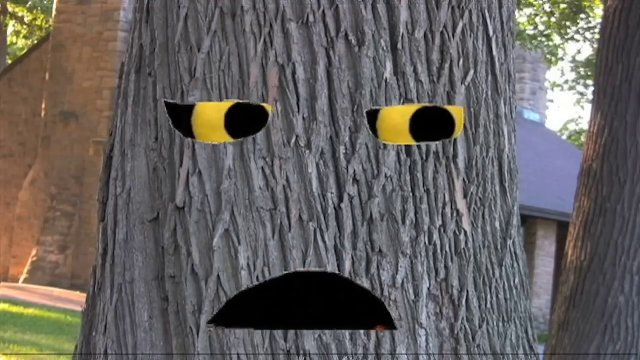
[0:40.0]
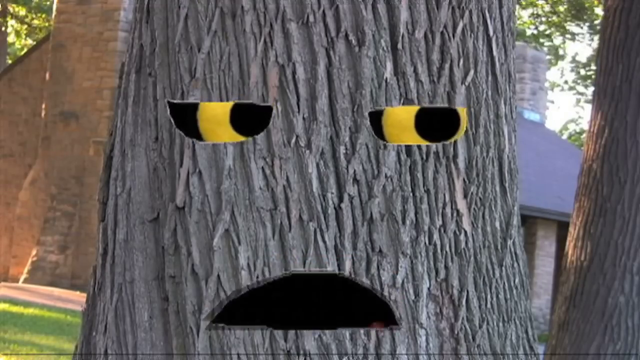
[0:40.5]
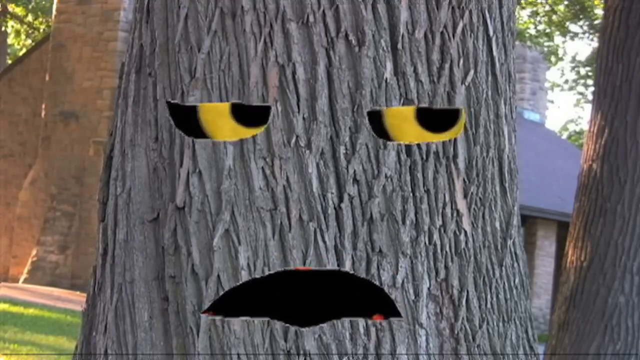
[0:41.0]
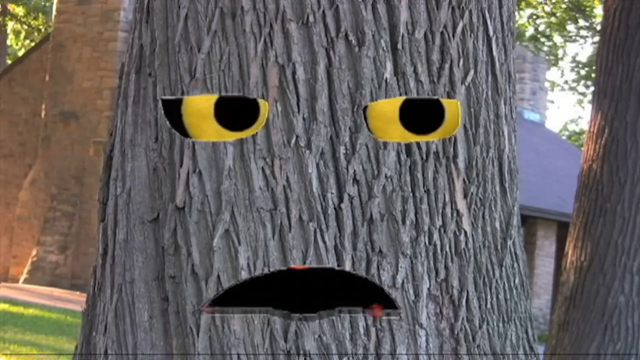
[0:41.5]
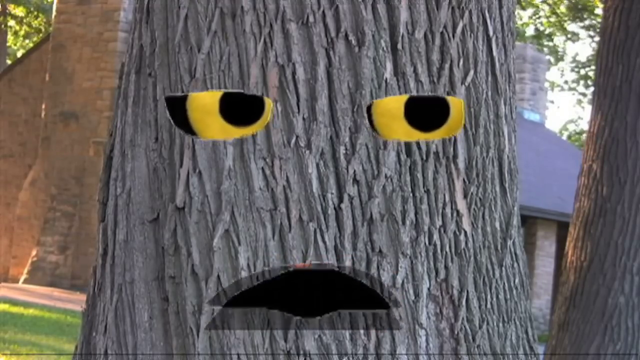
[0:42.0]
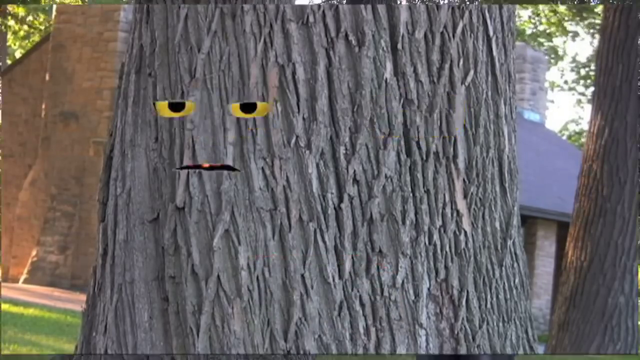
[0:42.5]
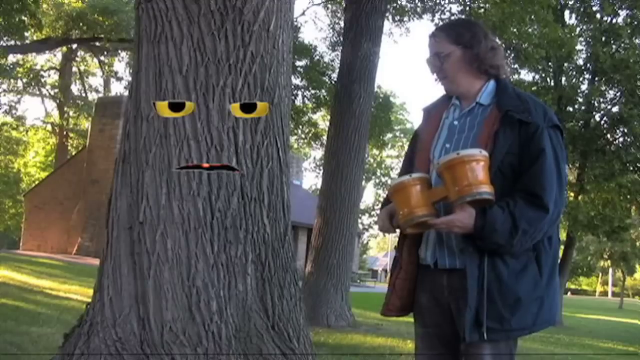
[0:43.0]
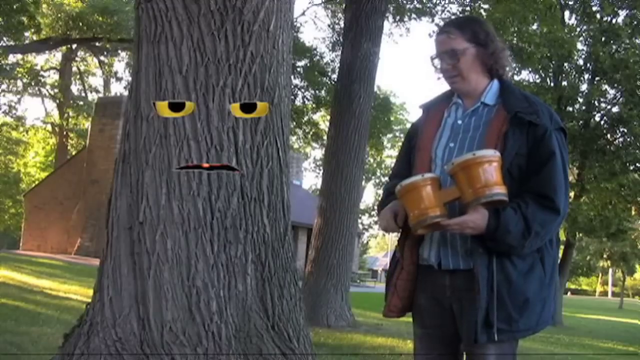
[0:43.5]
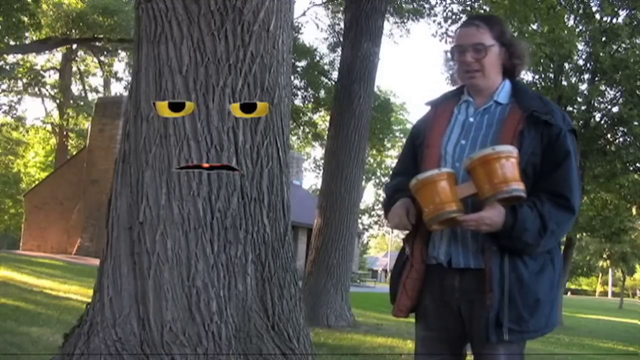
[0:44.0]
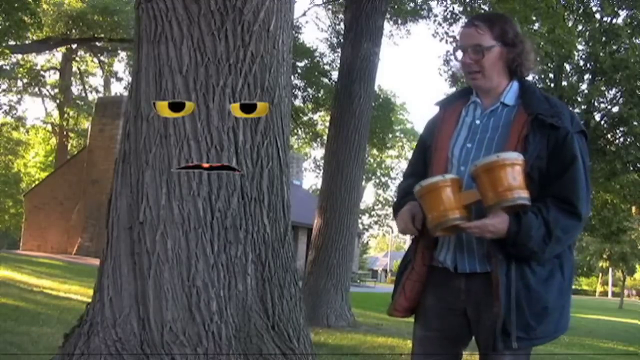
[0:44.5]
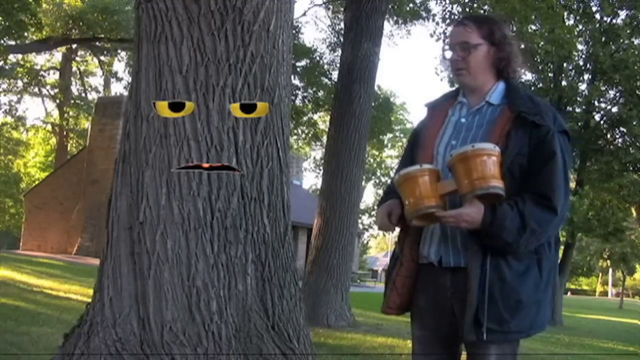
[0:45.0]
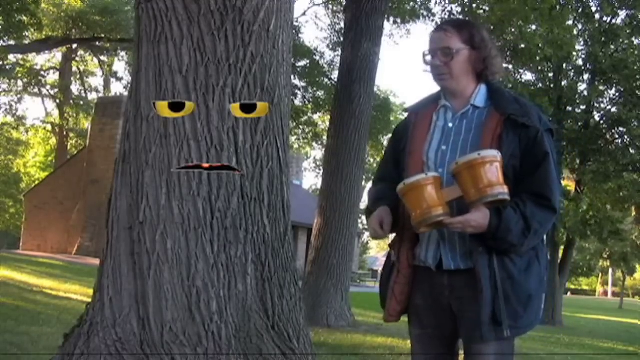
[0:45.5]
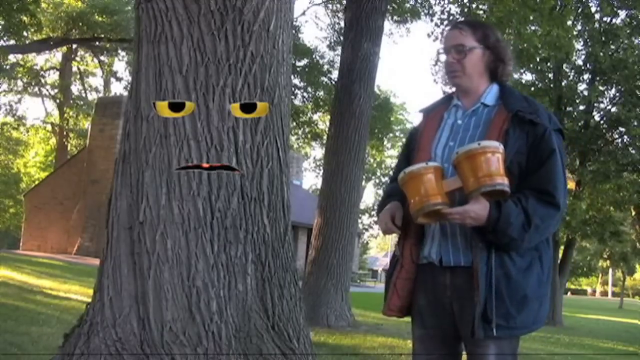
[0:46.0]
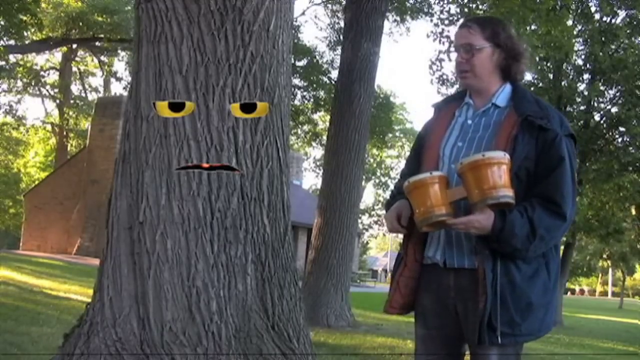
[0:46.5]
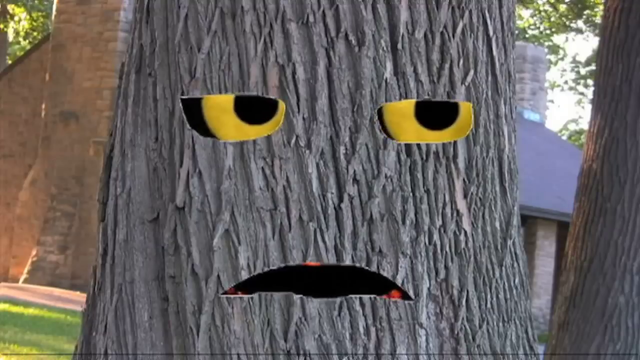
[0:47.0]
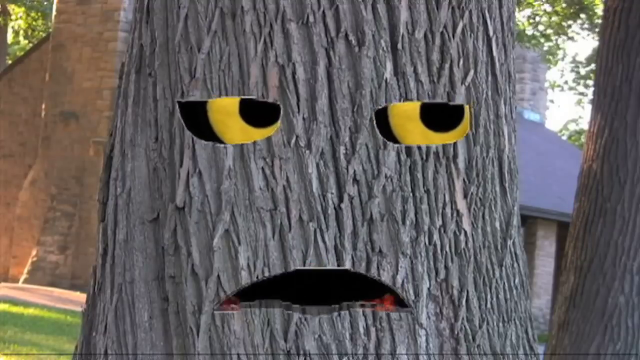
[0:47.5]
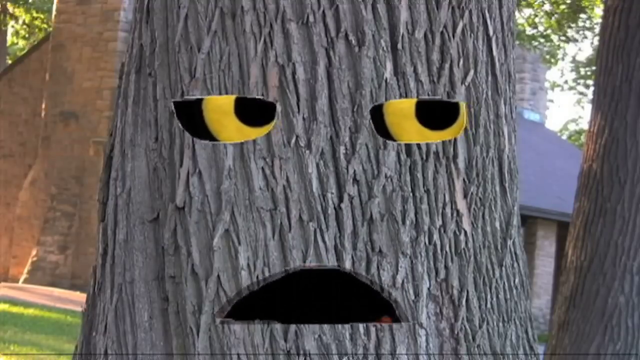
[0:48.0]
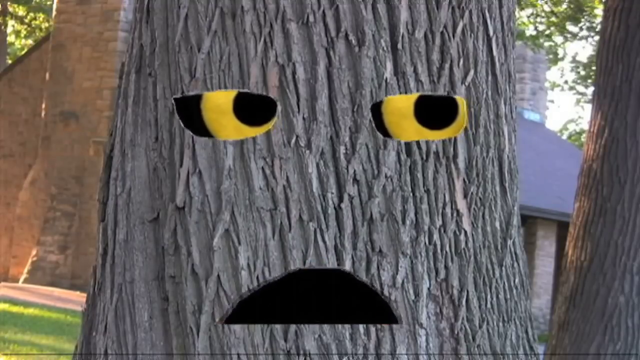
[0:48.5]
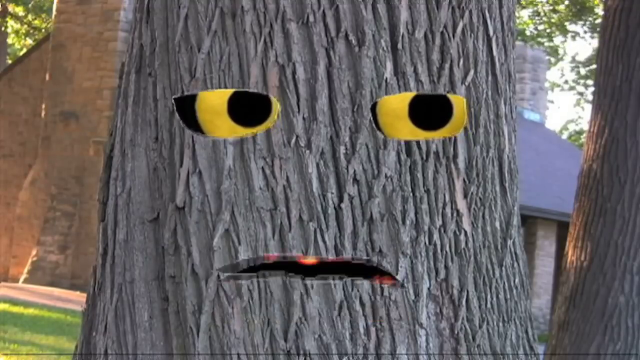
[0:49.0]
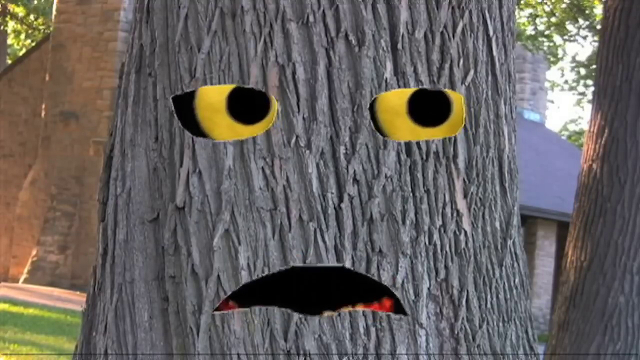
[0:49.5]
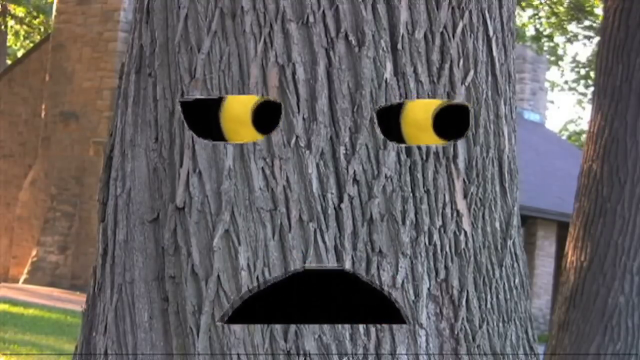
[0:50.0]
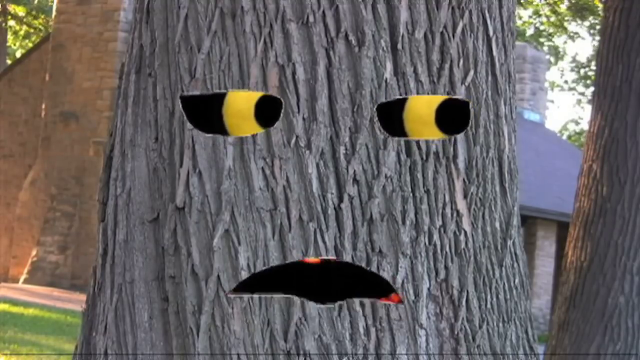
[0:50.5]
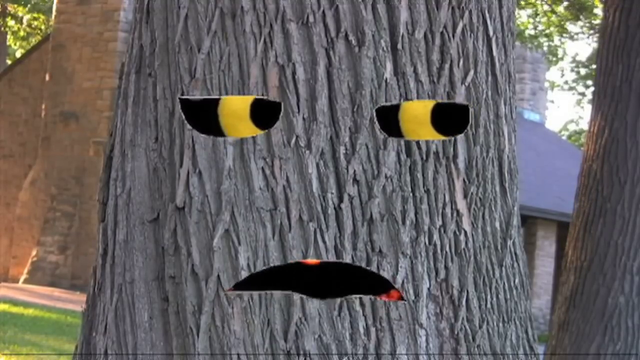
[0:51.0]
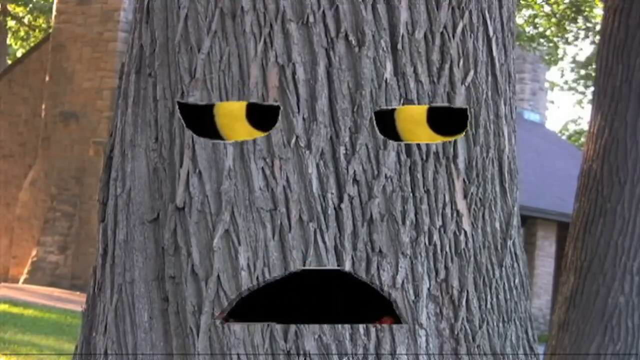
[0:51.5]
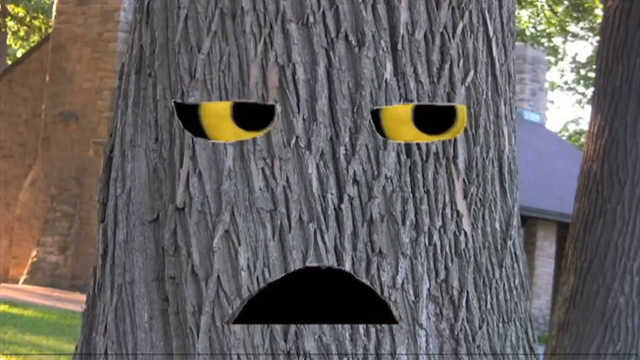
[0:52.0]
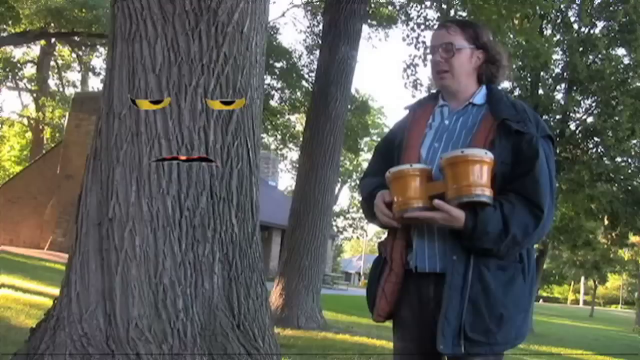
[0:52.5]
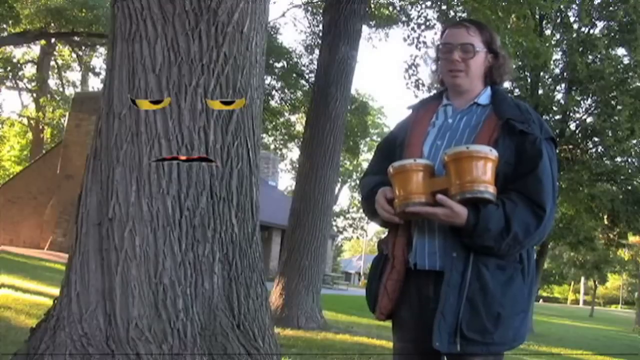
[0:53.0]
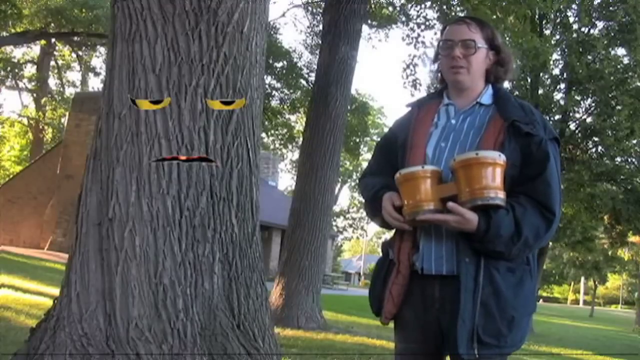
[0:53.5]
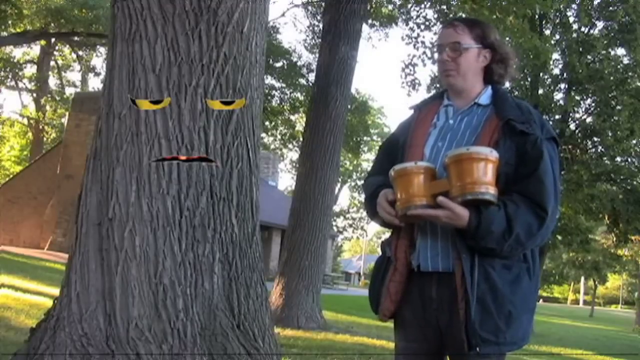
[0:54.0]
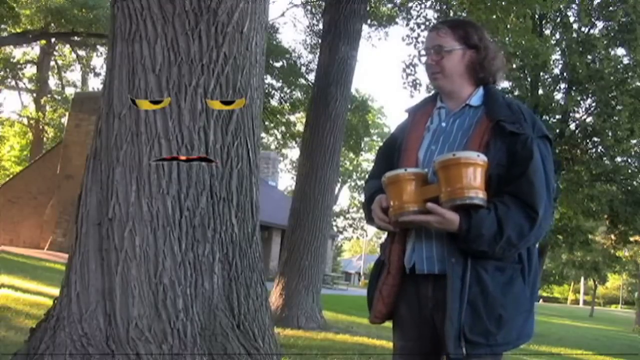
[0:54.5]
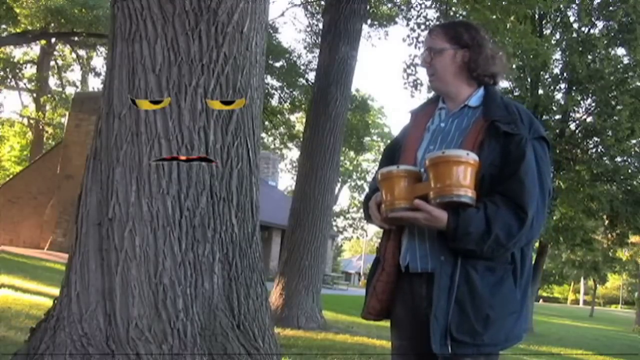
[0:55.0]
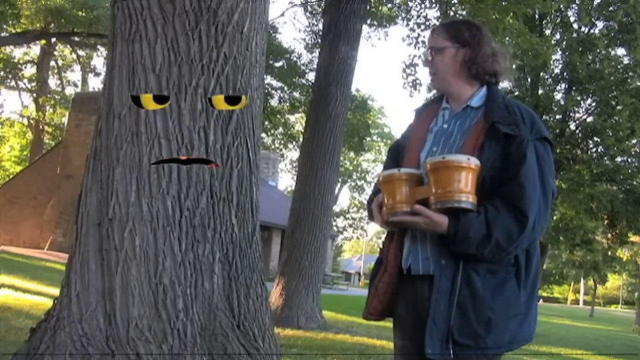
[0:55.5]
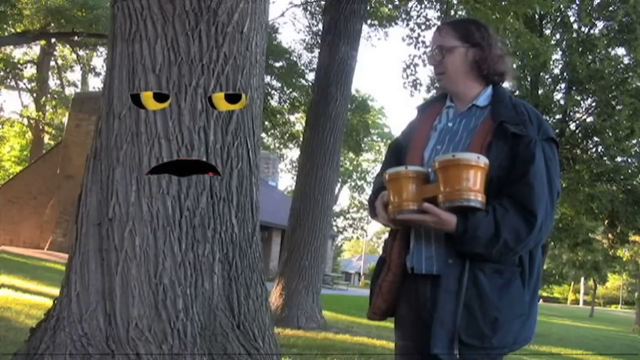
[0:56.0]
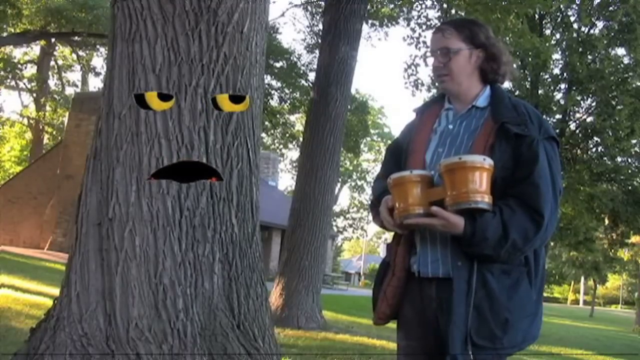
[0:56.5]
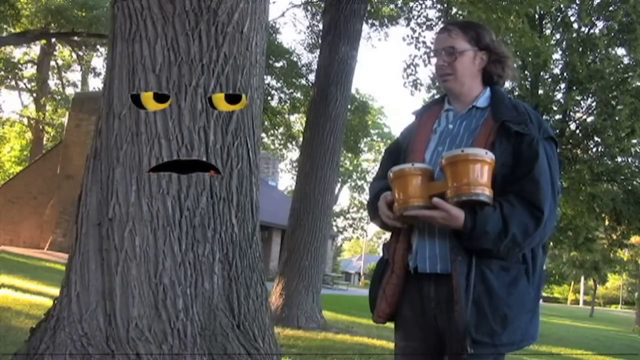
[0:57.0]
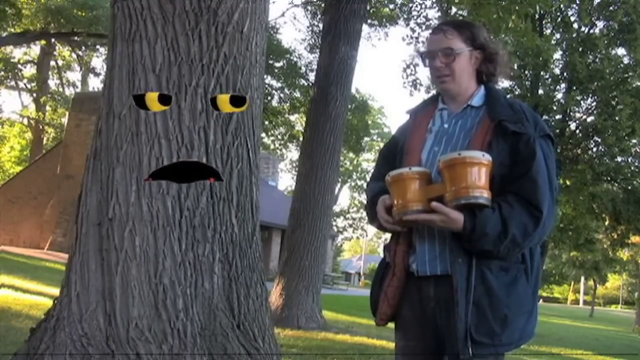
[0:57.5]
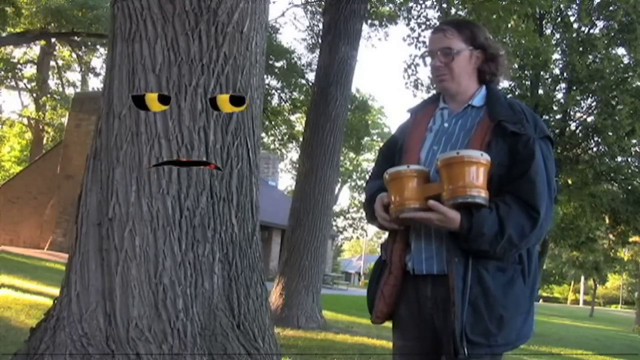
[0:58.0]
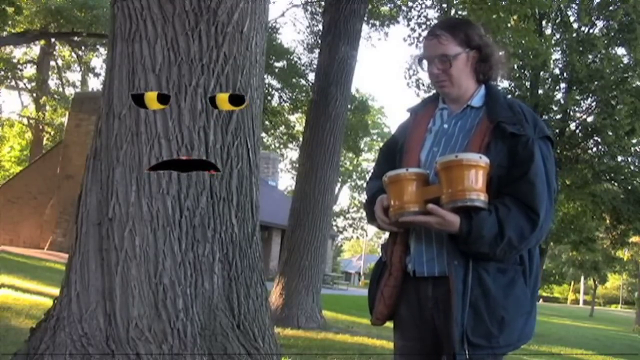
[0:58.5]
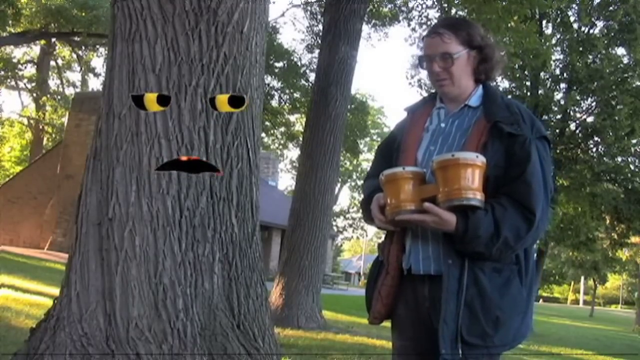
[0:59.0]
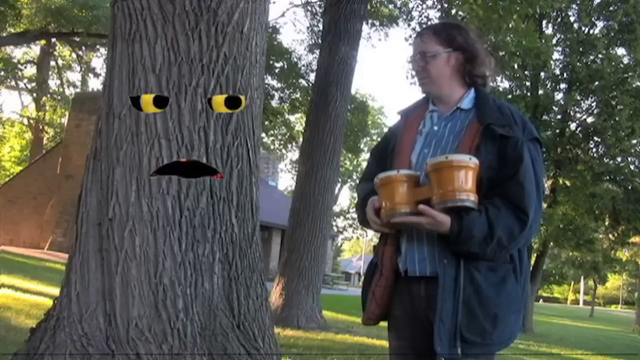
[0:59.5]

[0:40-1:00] A close-up shows the tree talking, then a shot shows both the tree and the man, with the man talking. The shots keep alternating between close-ups of the talking tree and shots of the man and the tree as each talks. Whenever the tree talks, its eyes move around a little, always facing toward the right and then returning toward the center in a sort of rolling pattern. Inside the tree's mouth it is mostly black, but the edges have a red glowing pattern that almost looks like fire. The eyes and mouth are very poorly painted on and not realistic at all, which is not what they are going for.